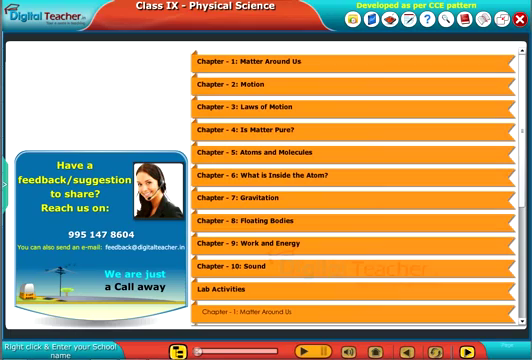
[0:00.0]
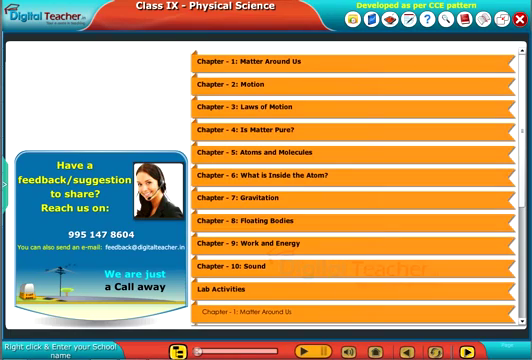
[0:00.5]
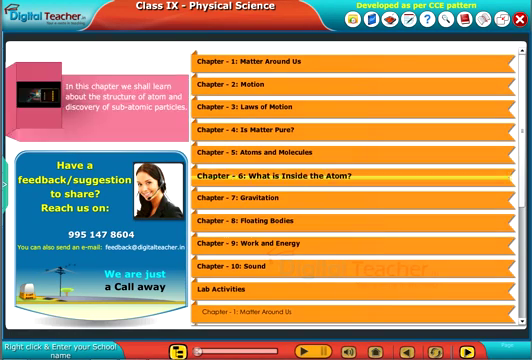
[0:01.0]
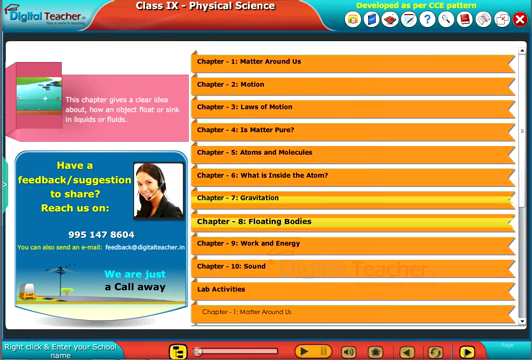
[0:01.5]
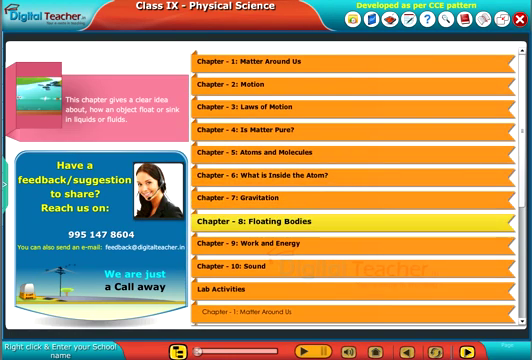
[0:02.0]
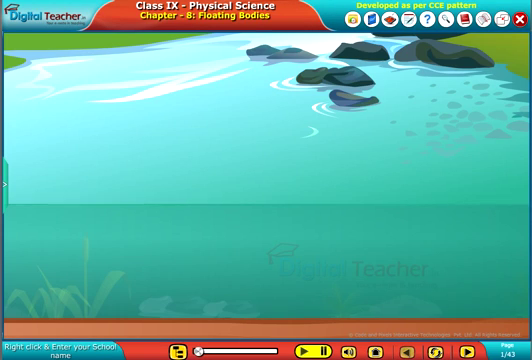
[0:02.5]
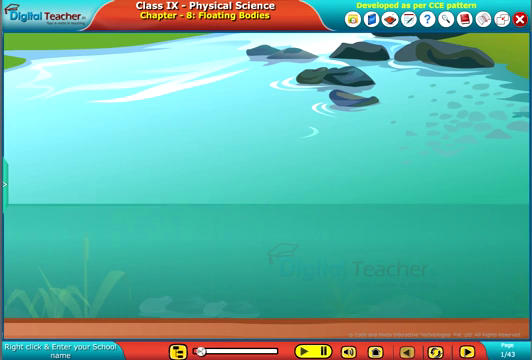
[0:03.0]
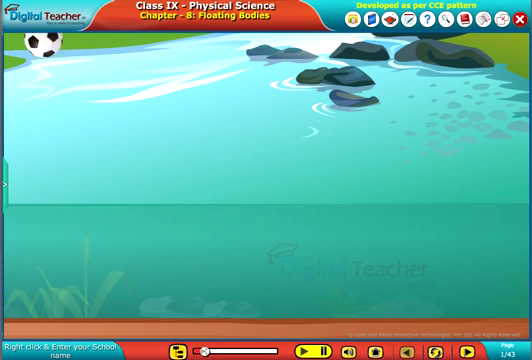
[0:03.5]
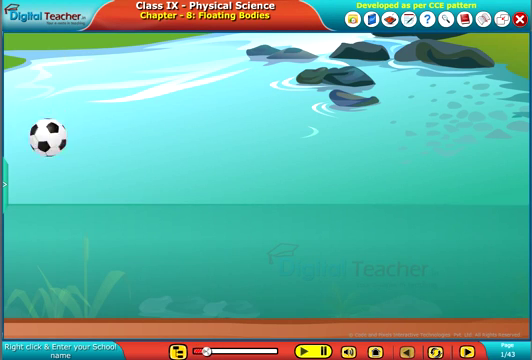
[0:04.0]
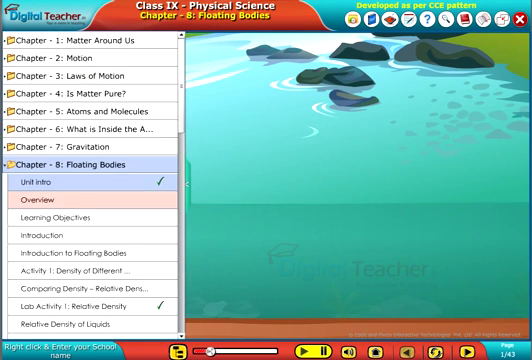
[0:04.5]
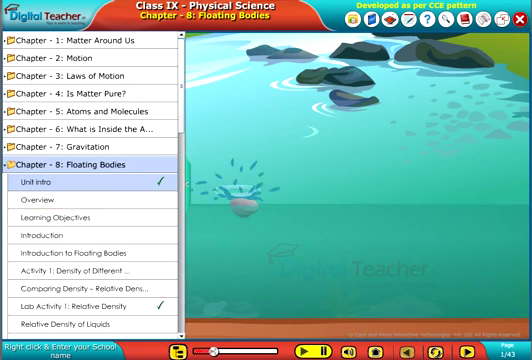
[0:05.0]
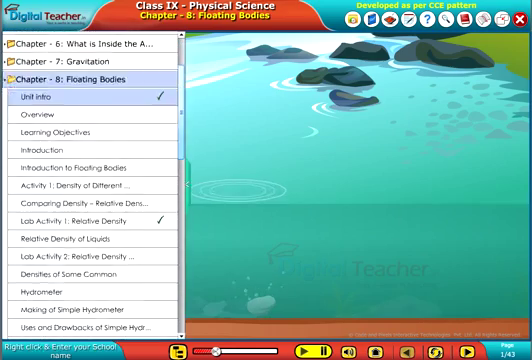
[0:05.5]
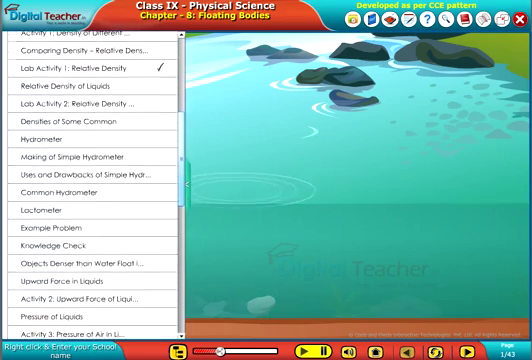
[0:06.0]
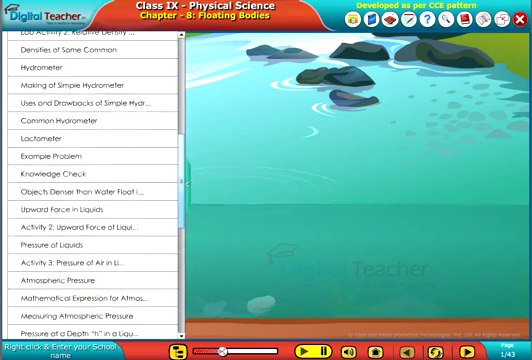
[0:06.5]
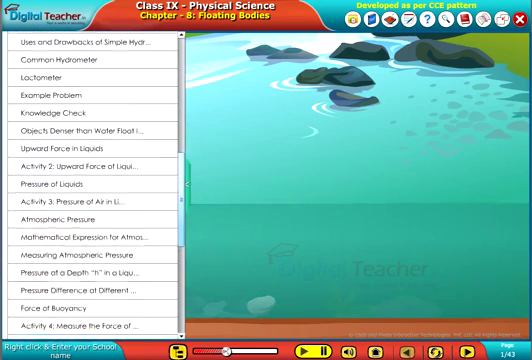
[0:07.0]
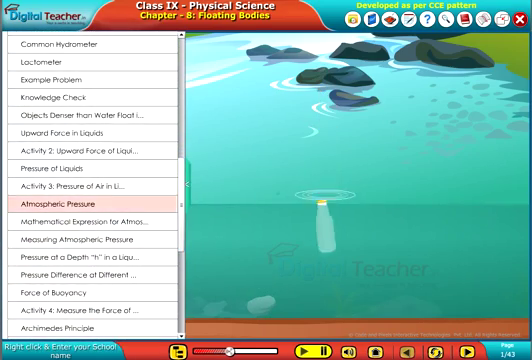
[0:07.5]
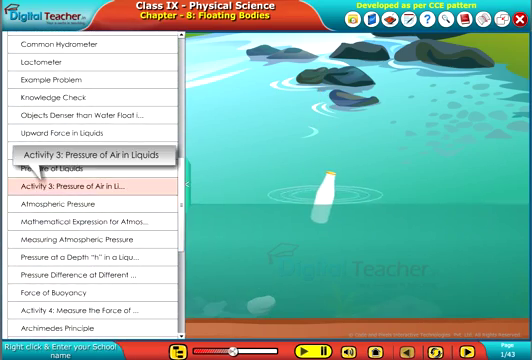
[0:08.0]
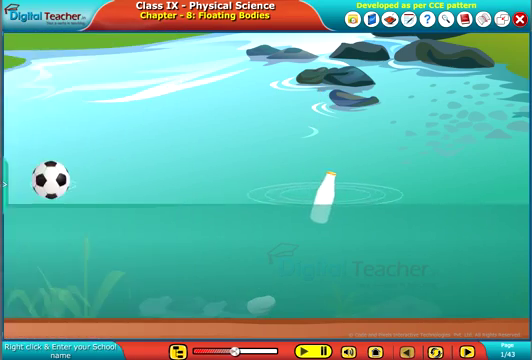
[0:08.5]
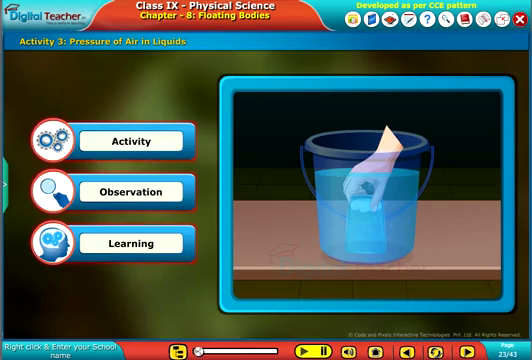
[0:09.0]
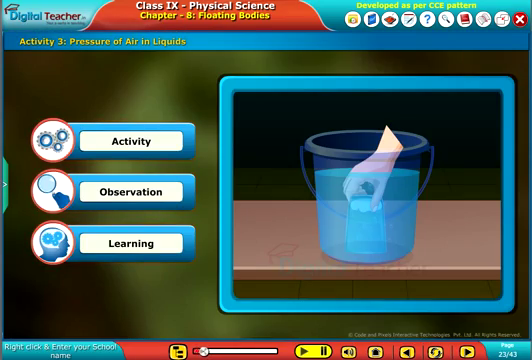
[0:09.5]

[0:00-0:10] A menu lists the chapters: "Matter around us", chapter 2 "motion", chapter 3 "loss of motion", chapter 4 "is matter pure", chapter 5 "atoms and molecules", chapter 6 "what is inside the atom", chapter 7 "gravitation", chapter 8 "floating bodies", chapter 9 "works and energy" and chapter 10 "sound", along with activities and a feedback option. Chapter 8, floating bodies, is chosen, leading to a picture in which a ball, a rock and a bottle are floating. The chapter 8 page shows all of its activities, and activity 3 is selected, which has three options.